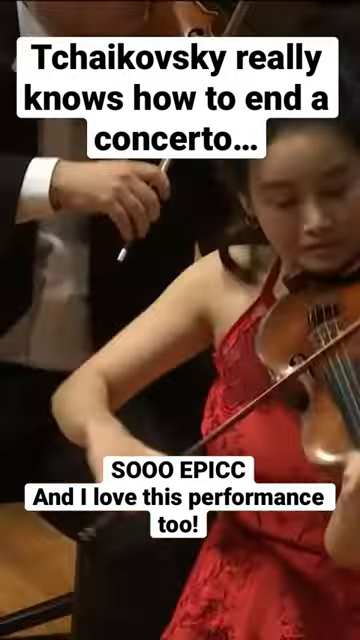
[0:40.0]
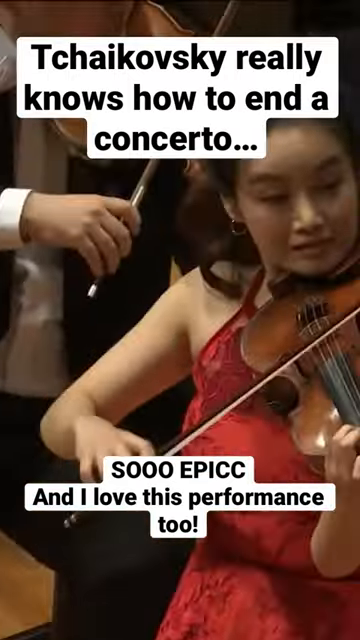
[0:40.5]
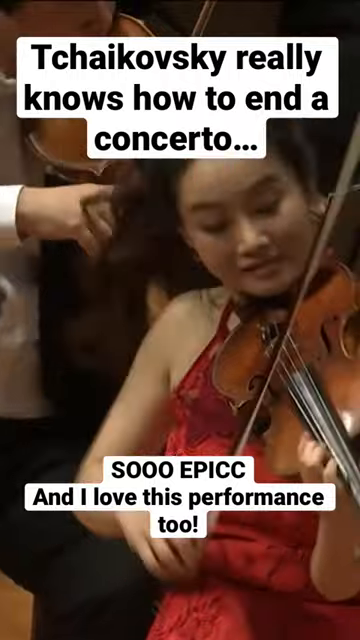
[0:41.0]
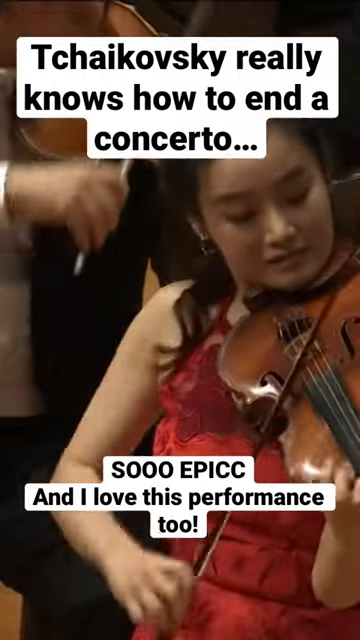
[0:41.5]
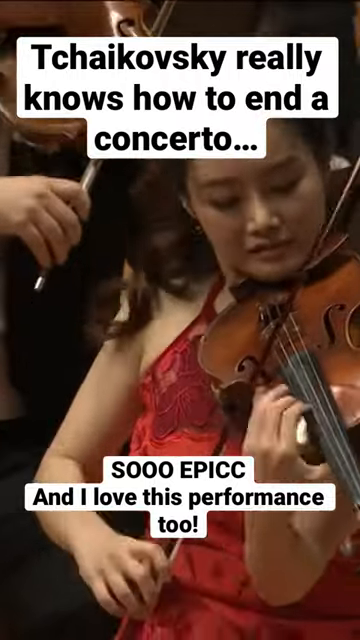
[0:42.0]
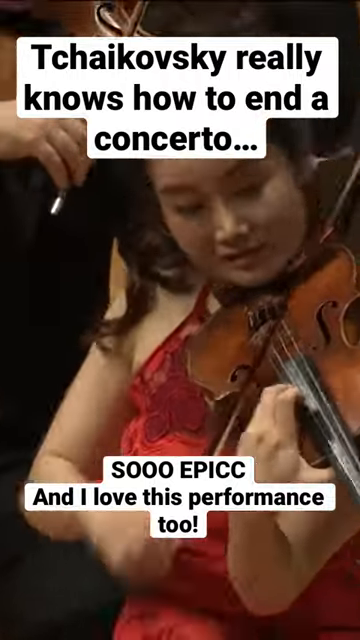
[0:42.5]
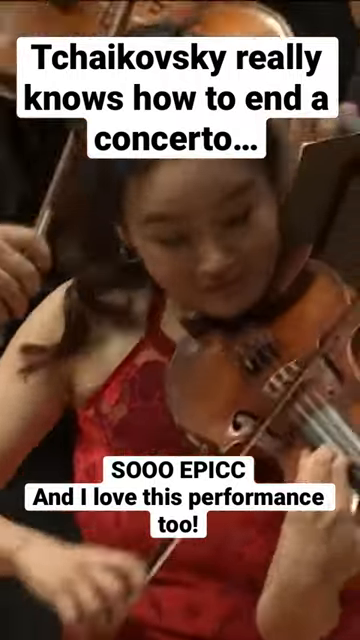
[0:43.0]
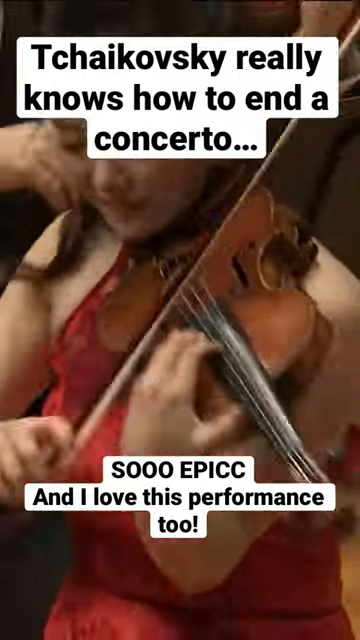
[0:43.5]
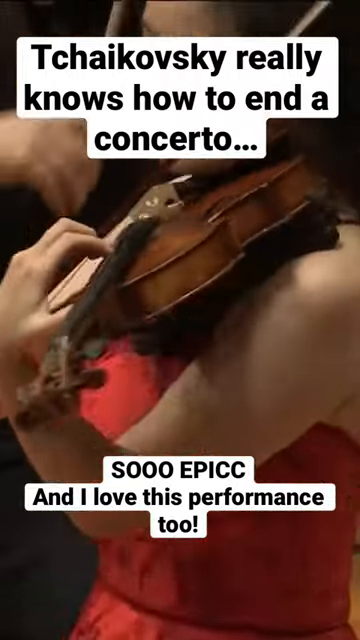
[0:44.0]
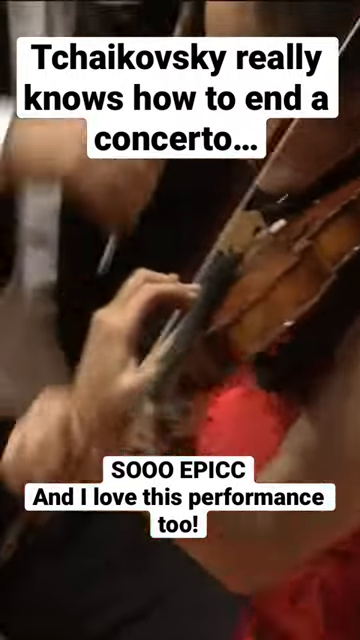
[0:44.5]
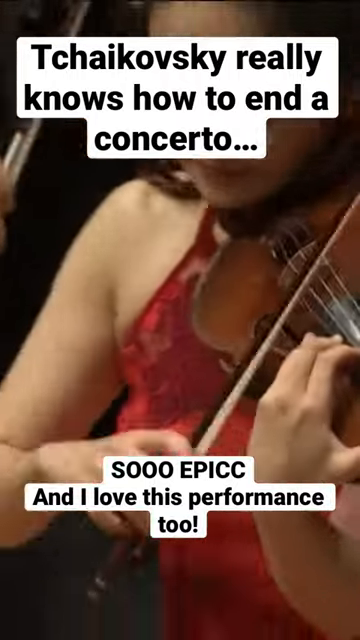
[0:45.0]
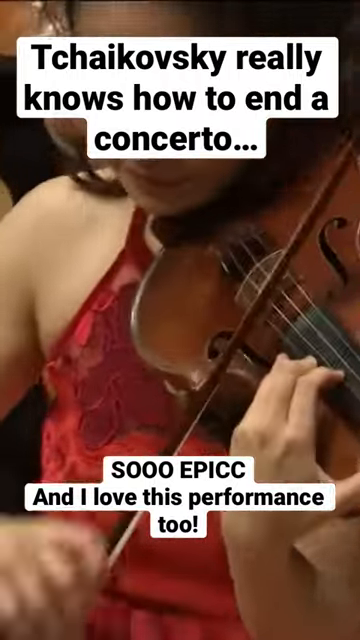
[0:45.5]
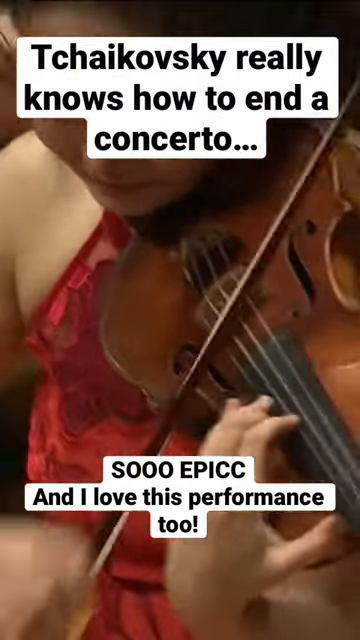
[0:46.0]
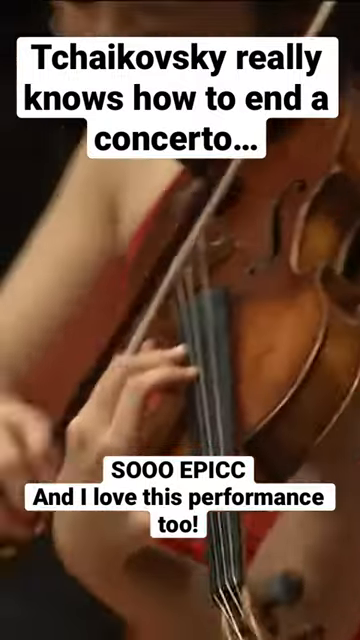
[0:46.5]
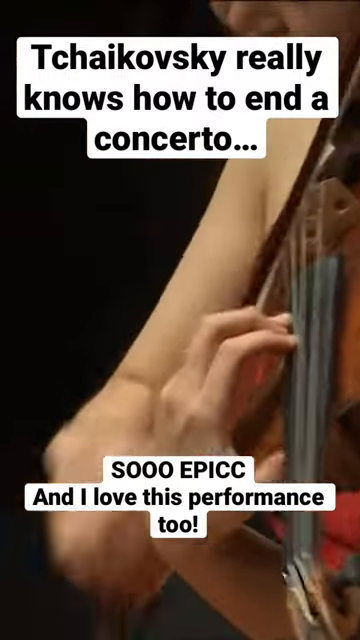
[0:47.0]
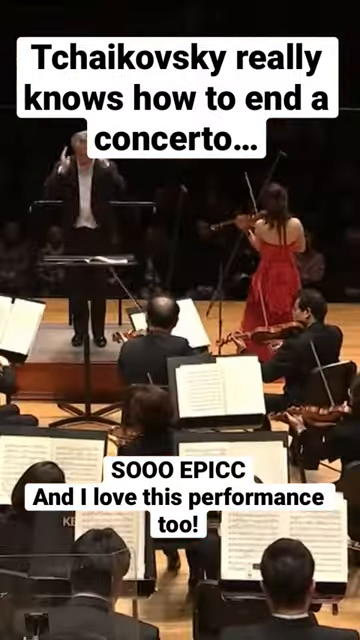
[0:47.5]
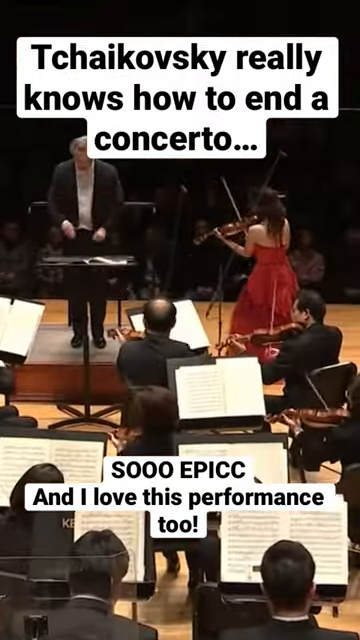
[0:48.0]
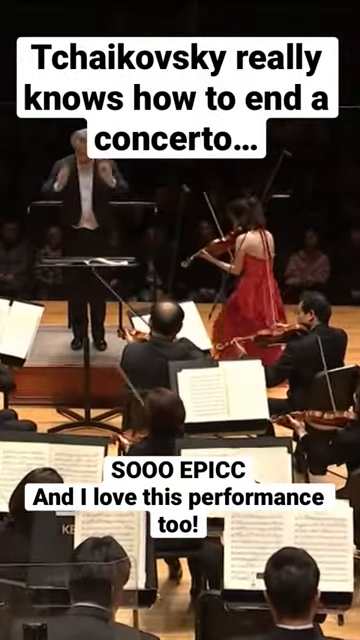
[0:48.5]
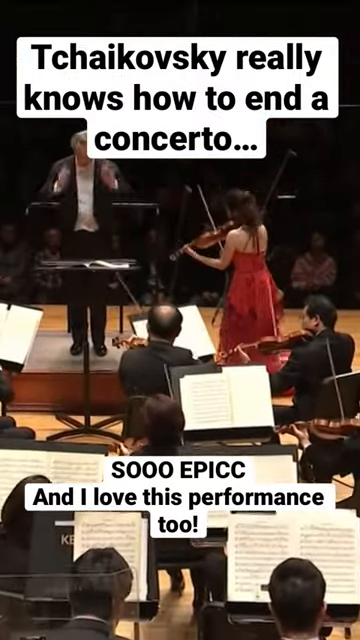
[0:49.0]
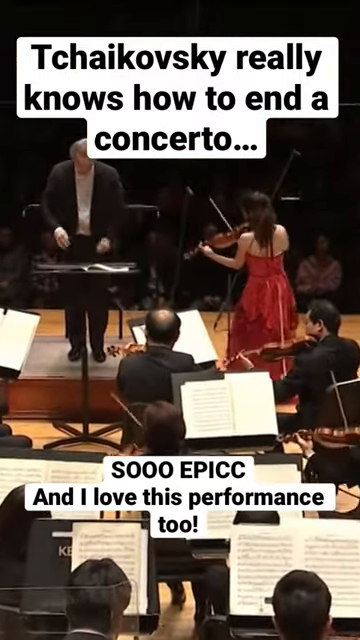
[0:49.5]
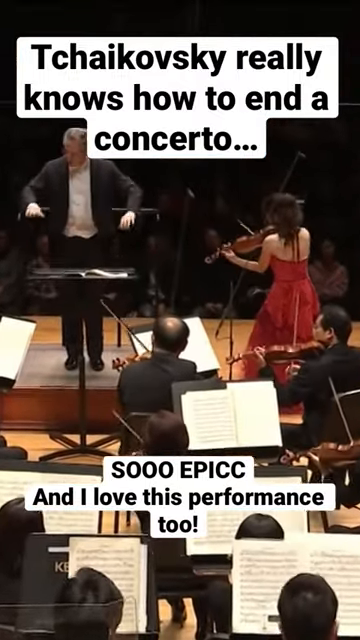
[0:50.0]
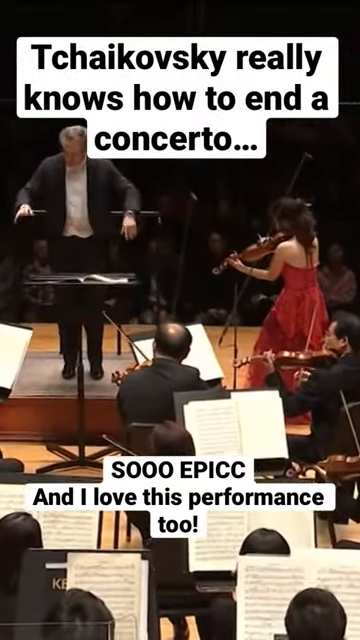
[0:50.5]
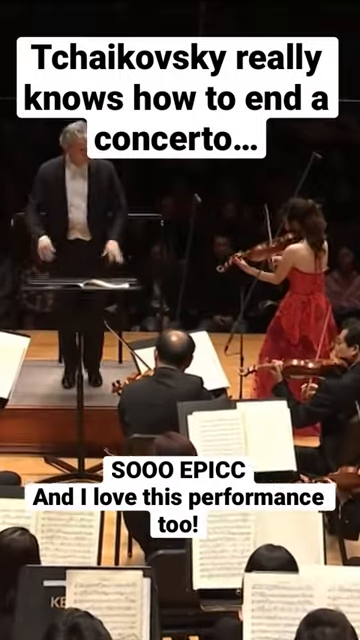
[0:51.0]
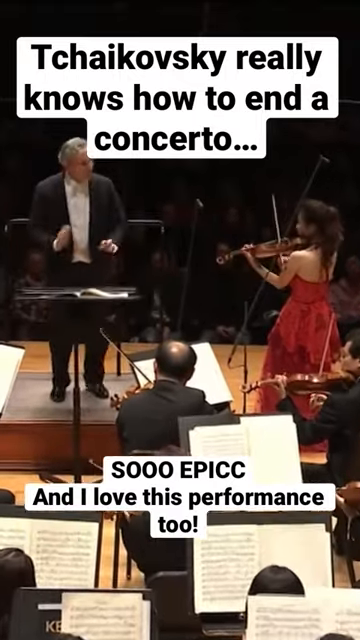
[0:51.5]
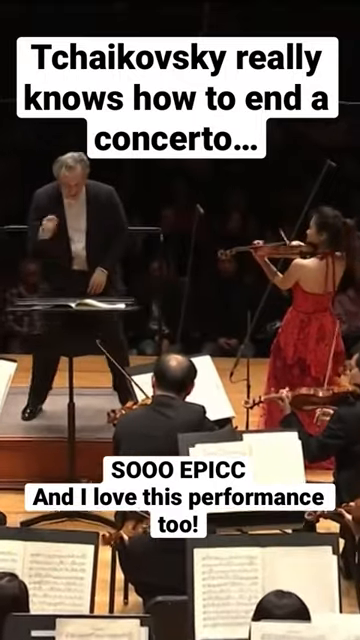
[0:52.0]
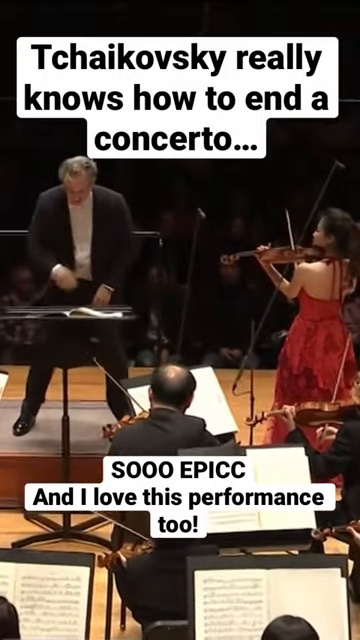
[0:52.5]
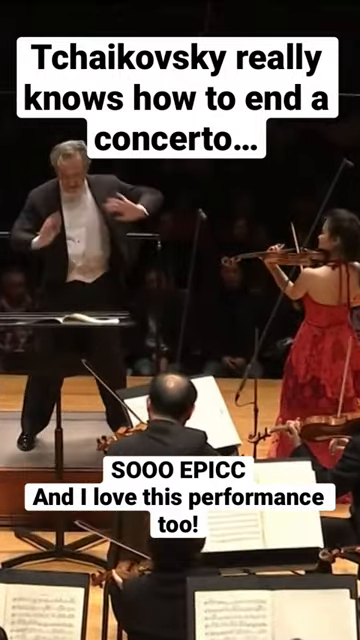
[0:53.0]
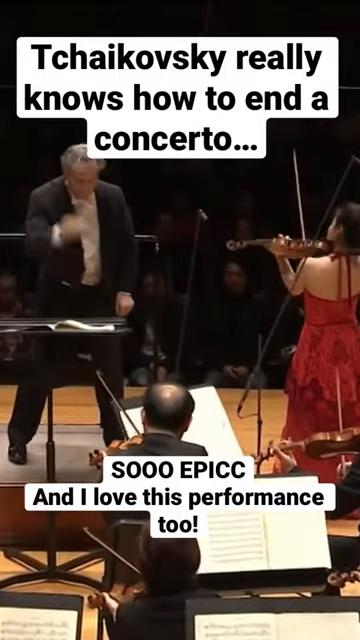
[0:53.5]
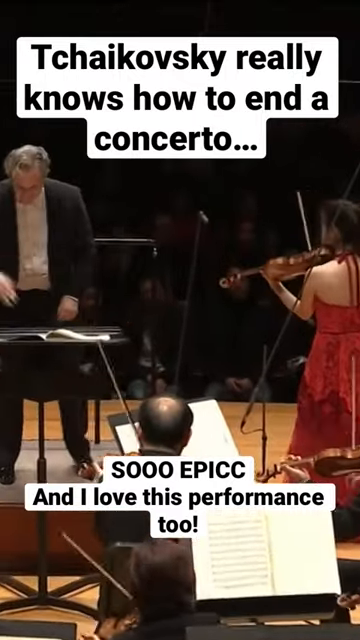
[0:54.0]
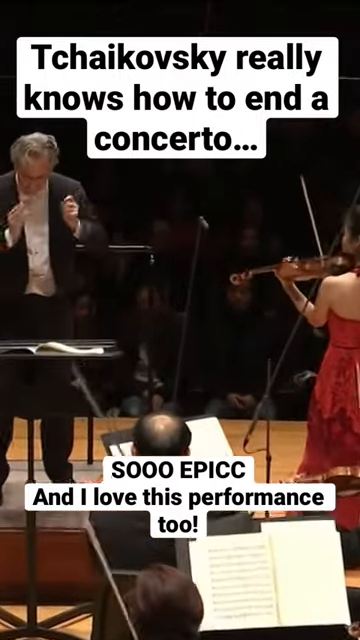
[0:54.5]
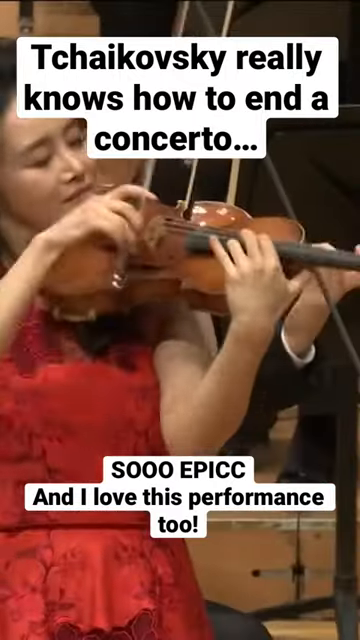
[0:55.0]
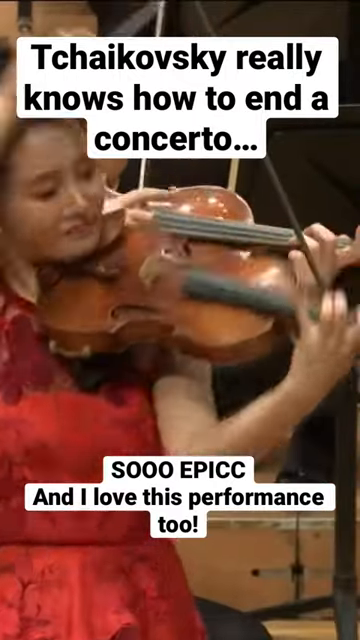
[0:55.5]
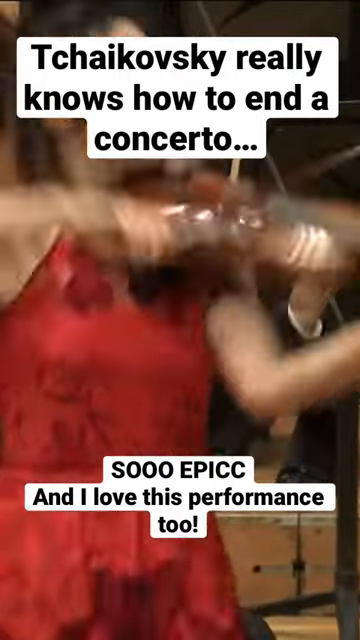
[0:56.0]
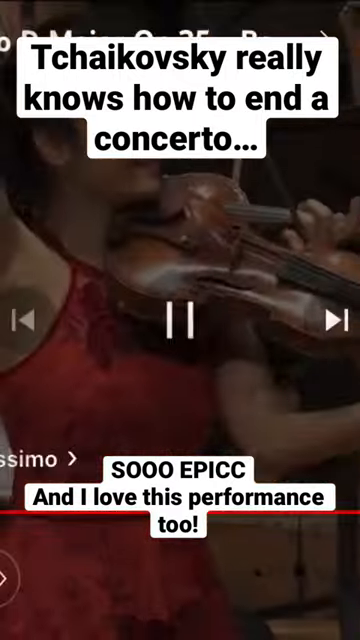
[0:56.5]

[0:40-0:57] The girl in the red dress plays the violin furiously within the orchestra. The players are shown from another vantage point, so the face of the conductor is visible. A few other violin players are in the foreground, and the girl in the red dress is also seen from behind. The video moves between different perspectives of the concert players, mostly focusing on the violin and a violinist.